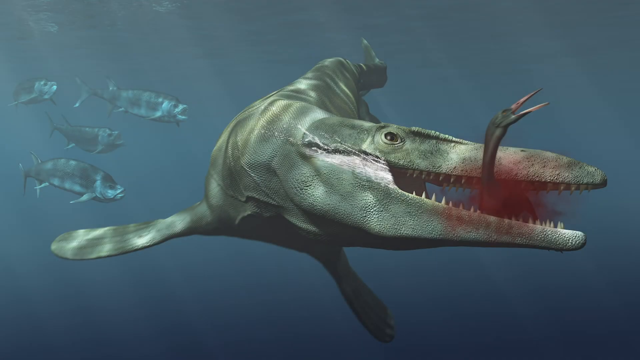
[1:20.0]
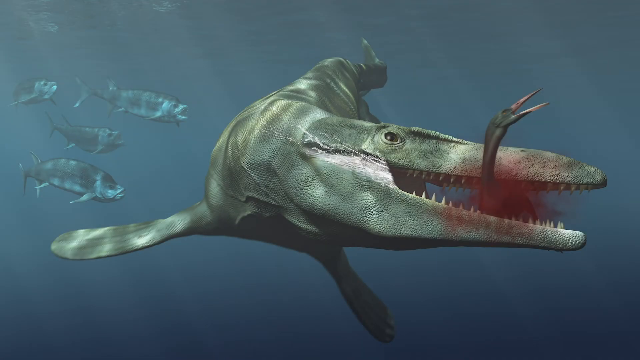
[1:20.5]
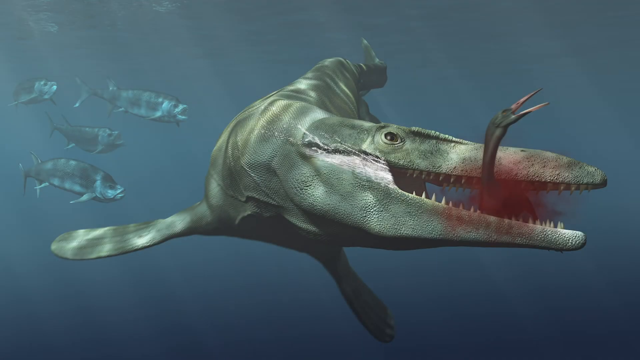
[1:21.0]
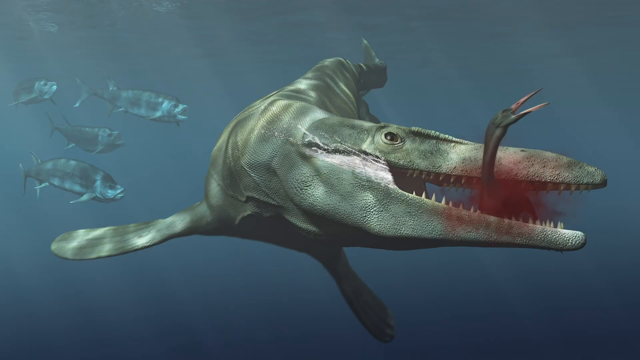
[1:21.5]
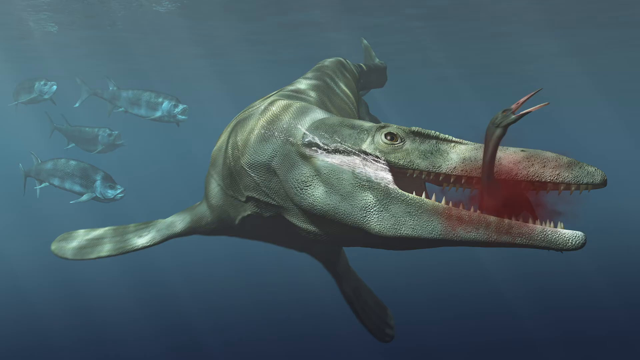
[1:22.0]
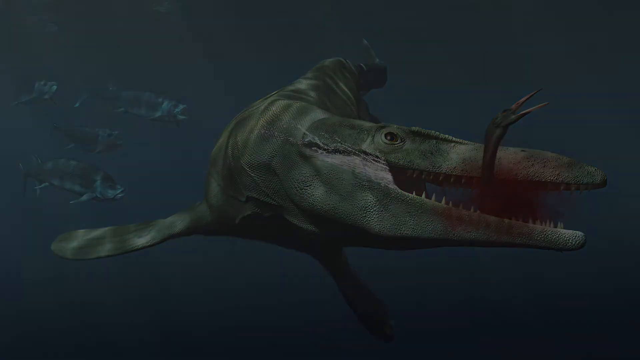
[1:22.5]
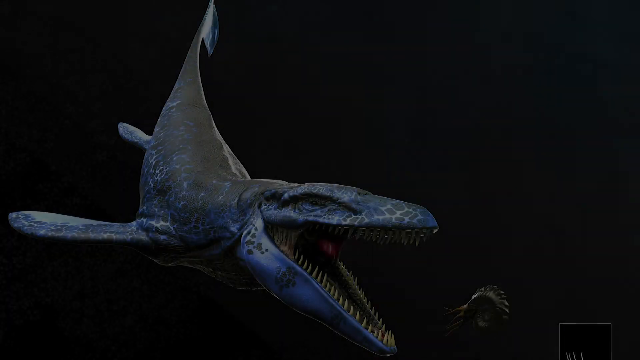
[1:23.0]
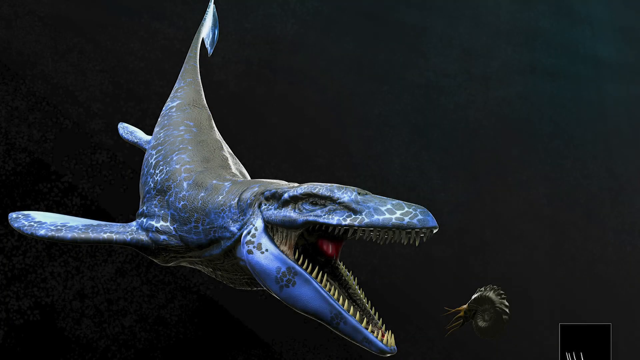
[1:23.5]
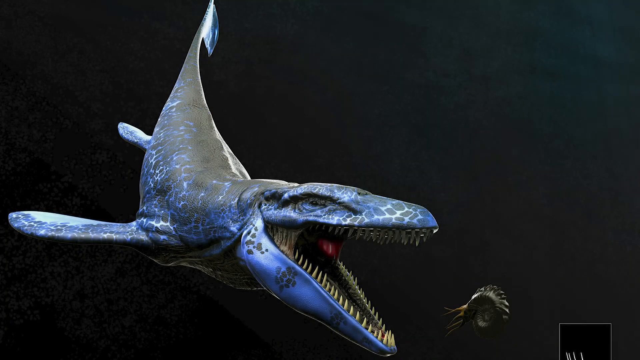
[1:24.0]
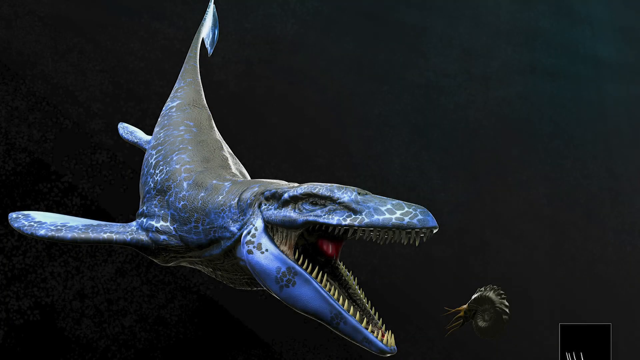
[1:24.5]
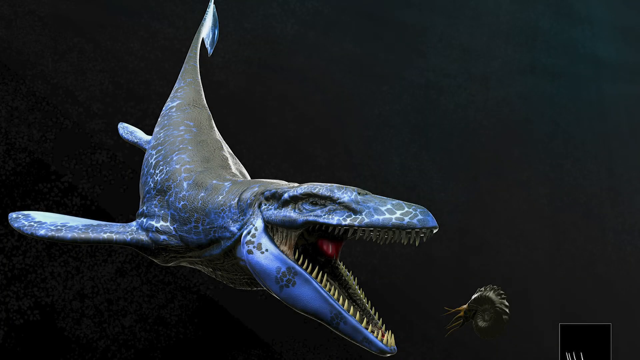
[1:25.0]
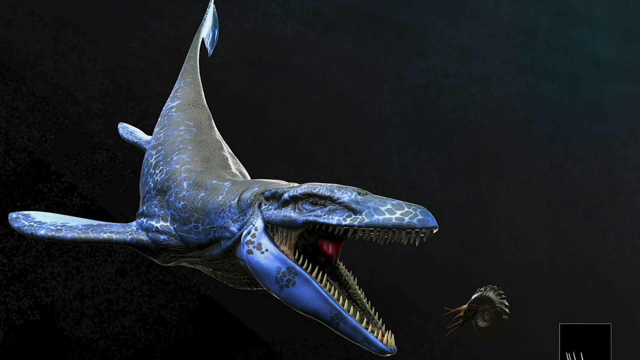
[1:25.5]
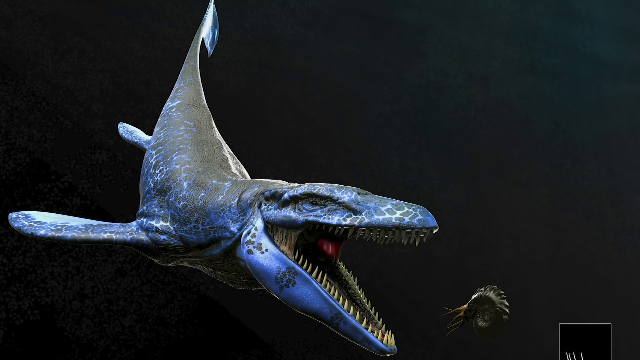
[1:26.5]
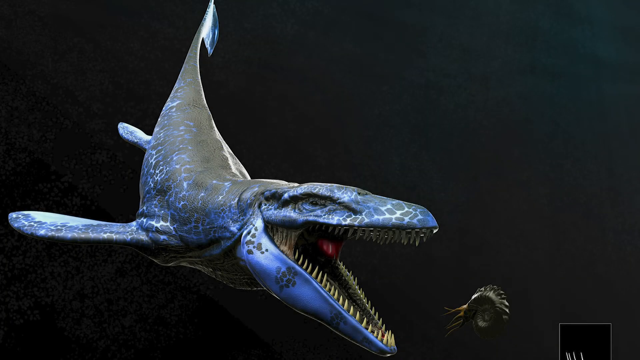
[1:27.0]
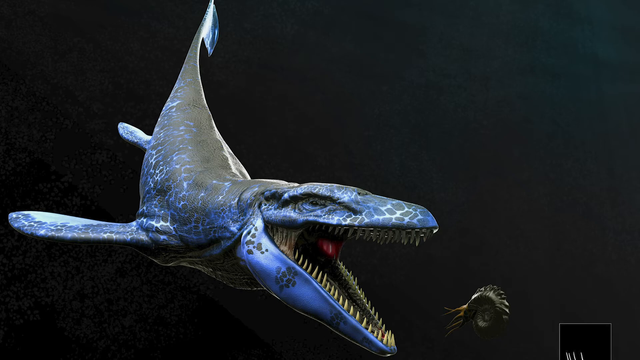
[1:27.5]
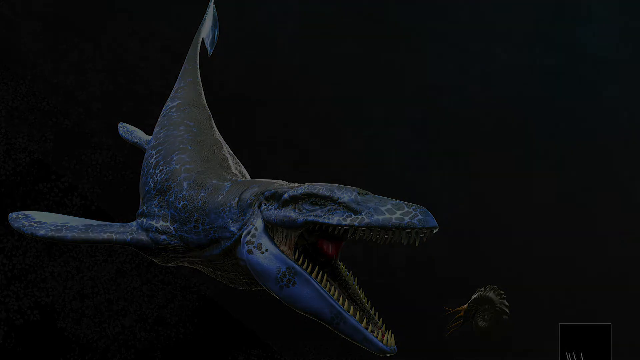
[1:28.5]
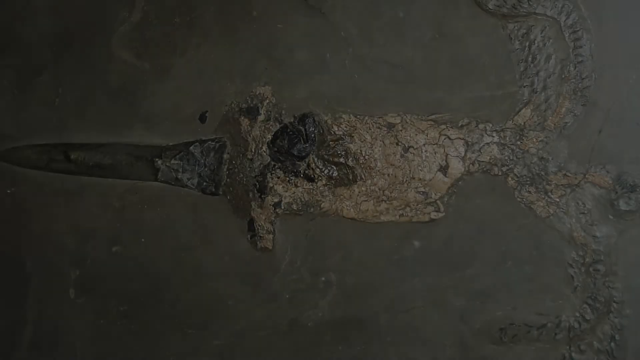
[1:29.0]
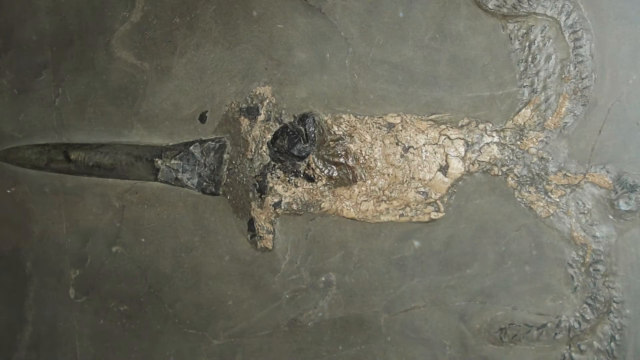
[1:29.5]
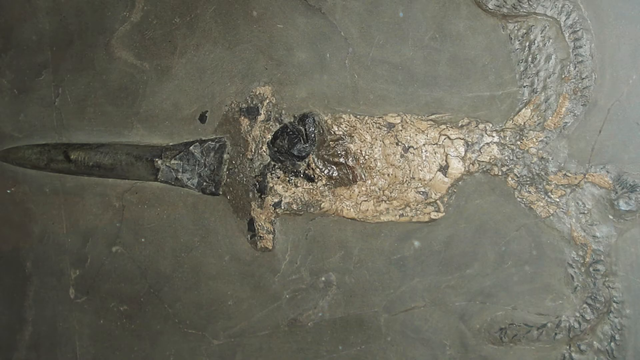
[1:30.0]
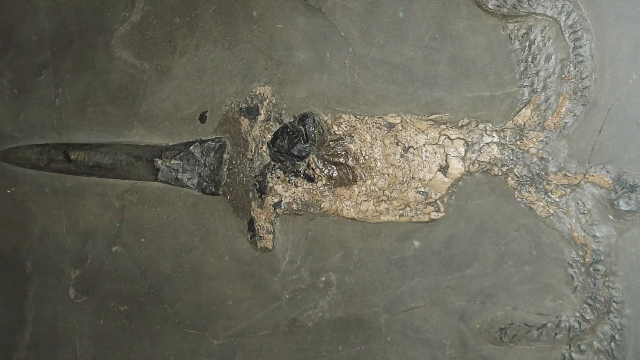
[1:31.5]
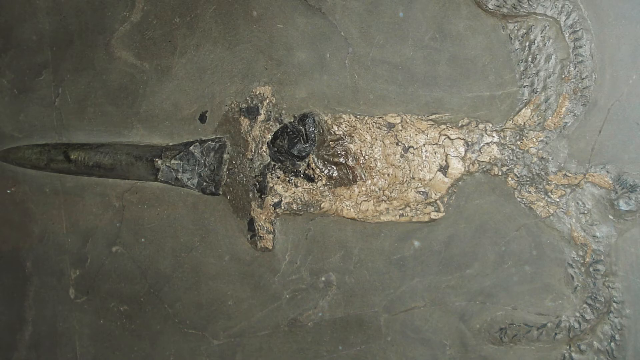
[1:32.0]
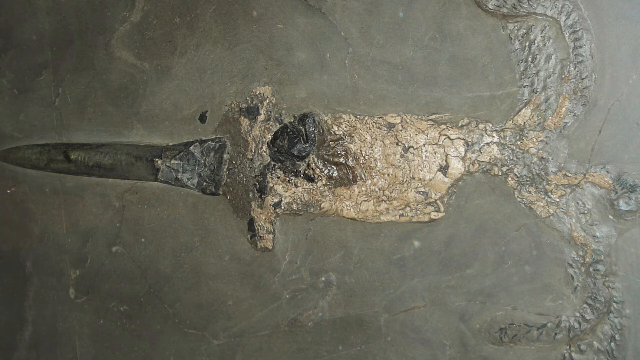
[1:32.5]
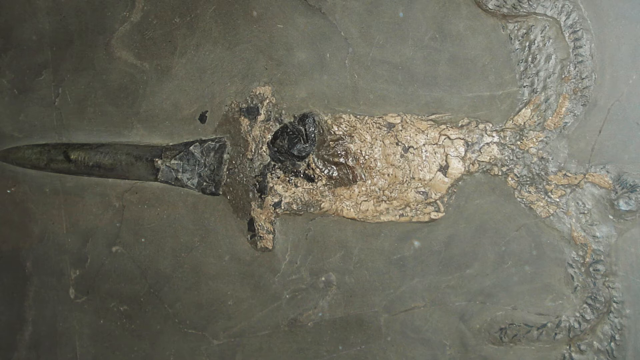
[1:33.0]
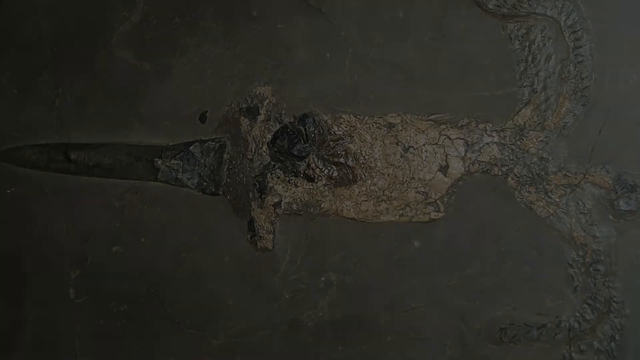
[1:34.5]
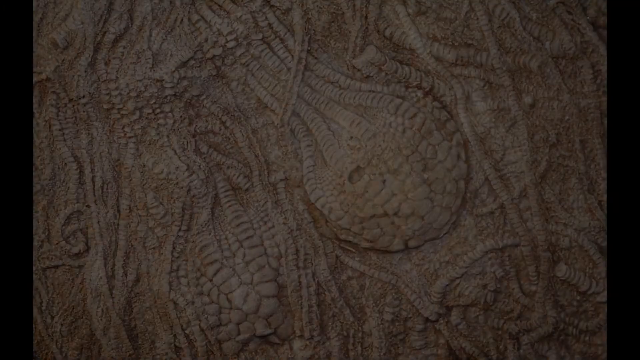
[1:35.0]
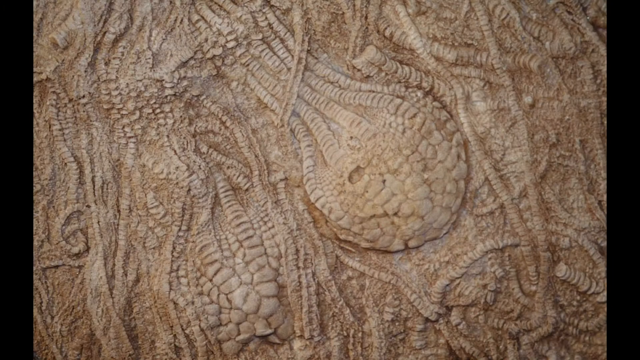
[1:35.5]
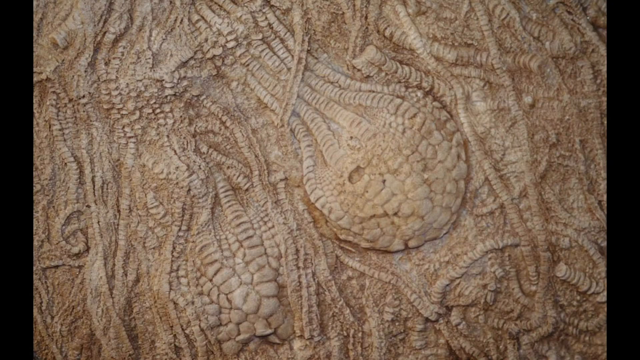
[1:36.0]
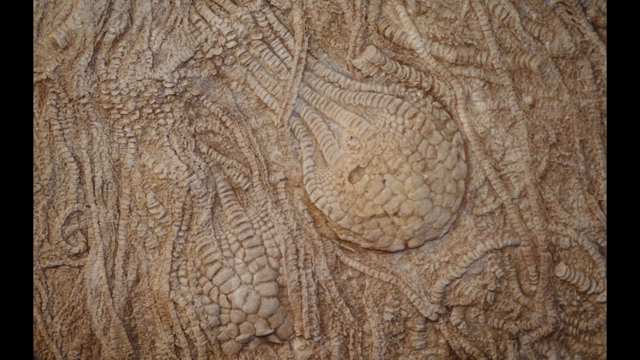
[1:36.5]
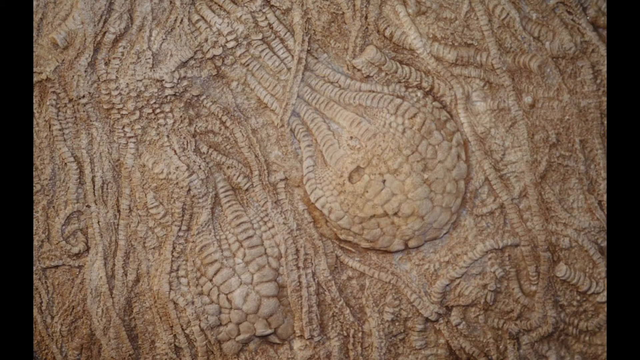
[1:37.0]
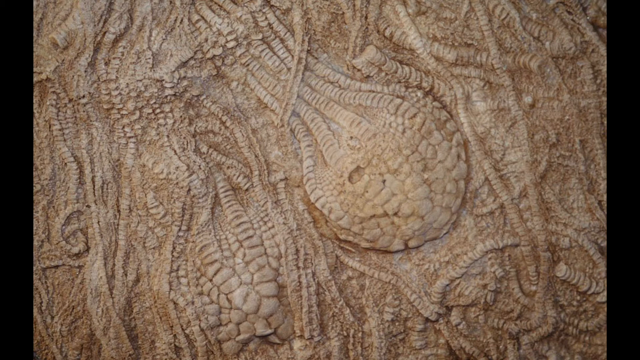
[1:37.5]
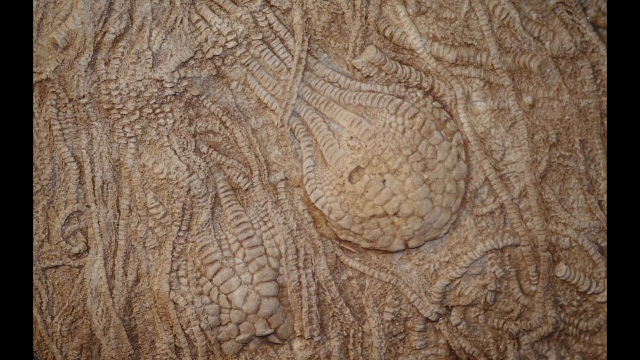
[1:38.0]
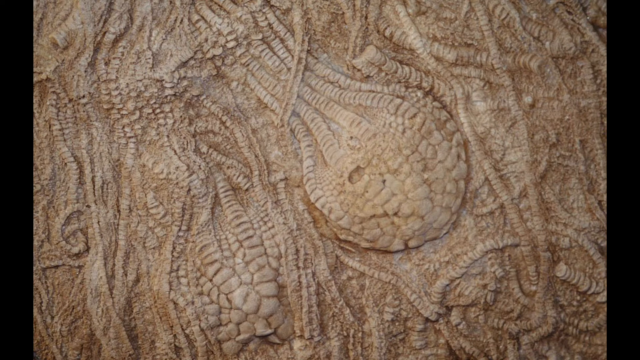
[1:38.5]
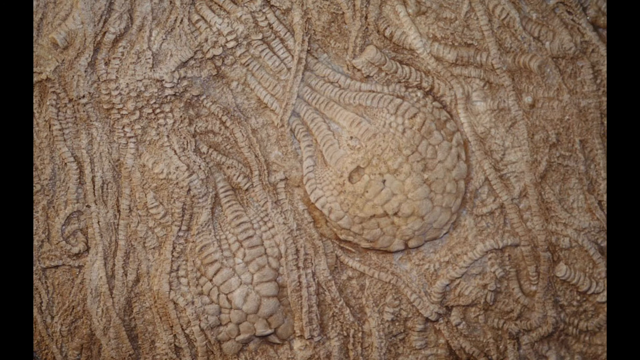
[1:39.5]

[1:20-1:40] A closer view shows the crocodile-shark creature, which looks more like a Komodo dragon with an elongated mouth, its head more like a T-Rex's. It has a rough, sort of rubbery, leather texture. It is eating a big duck or goose, a bird with a black body and a pinkish-red beak, and blood comes out of the bird's body as it is crushed. On the left are four sort of tuna-looking fish with front flippers sticking out; their bodies seem to curve more than the torpedo shape of a tuna. After a fade to black, another picture of this creature appears. It seems extra large, or perhaps that is just its size next to the creature it is going to eat. Its body is mostly black, with black spots all over its head and body, while its back is a smooth black; the texture has little squares and shapes, and the skin between the black is blue. Its mouth is wide open and its red tongue is visible. It goes to eat a shellfish with tentacles coming out of its body.